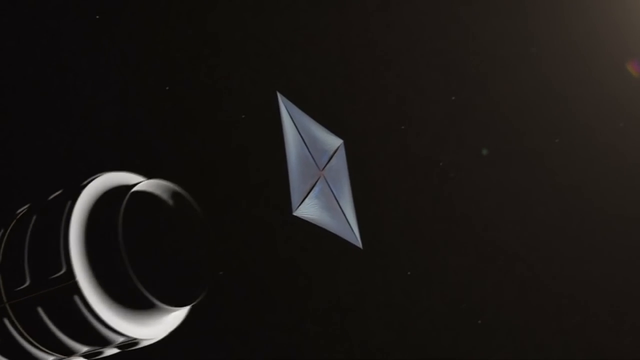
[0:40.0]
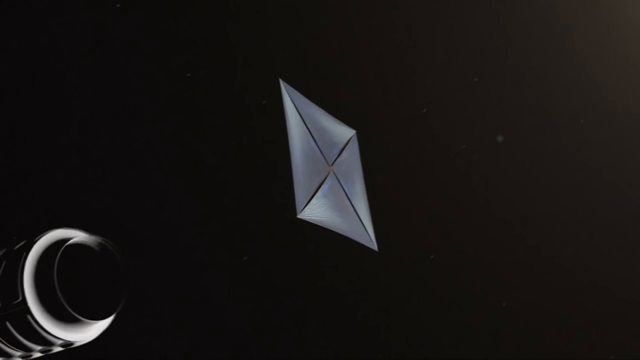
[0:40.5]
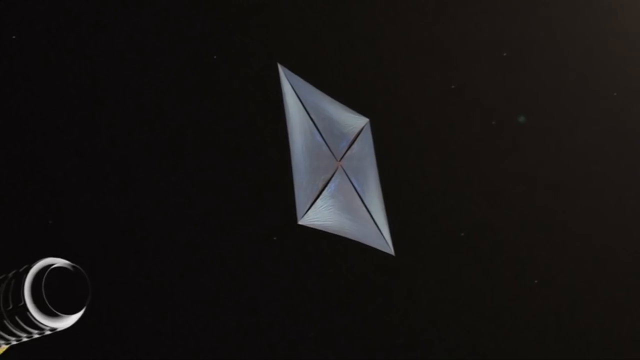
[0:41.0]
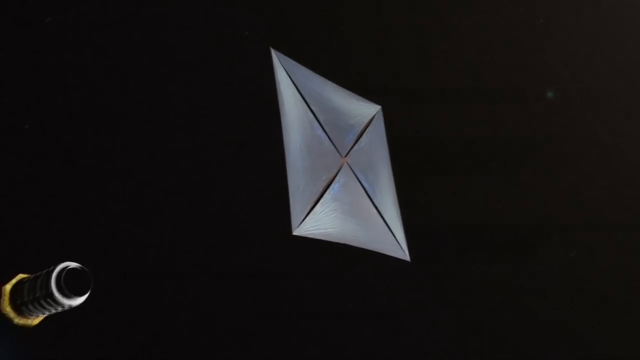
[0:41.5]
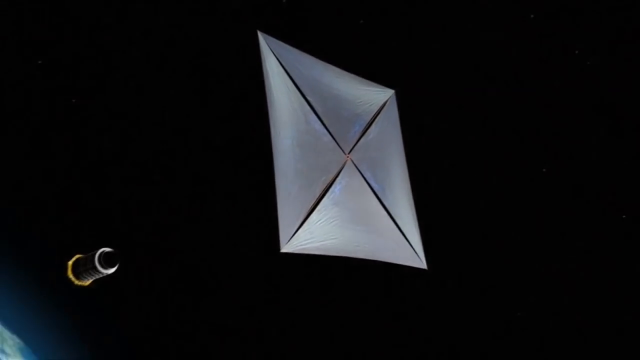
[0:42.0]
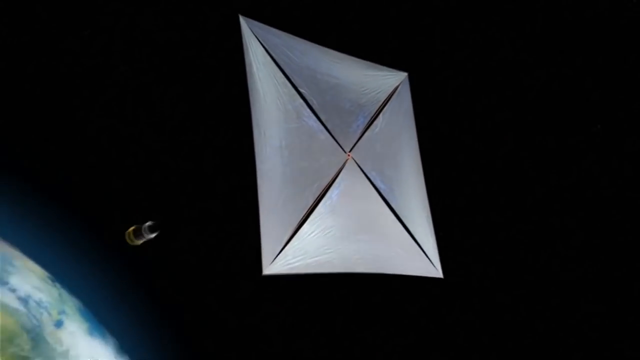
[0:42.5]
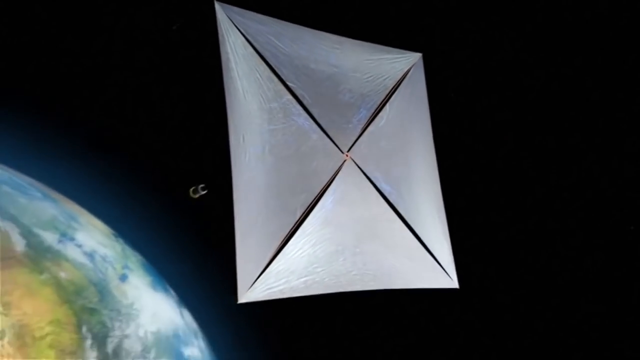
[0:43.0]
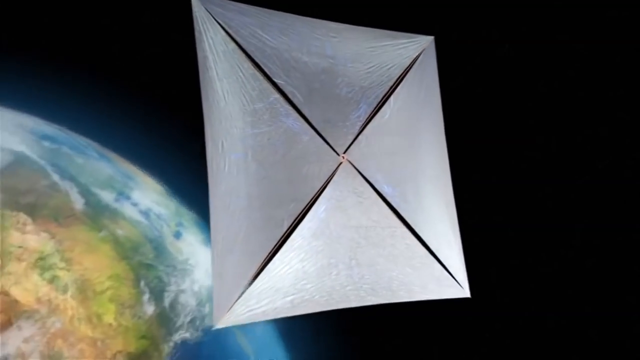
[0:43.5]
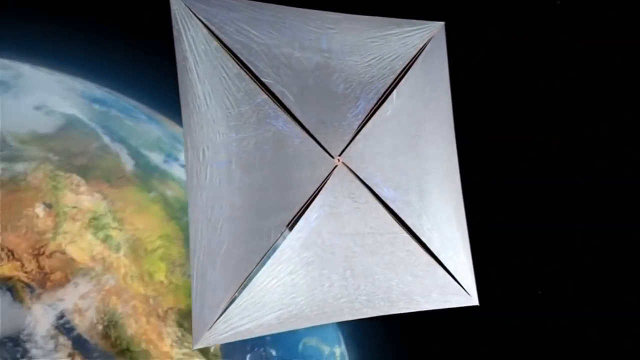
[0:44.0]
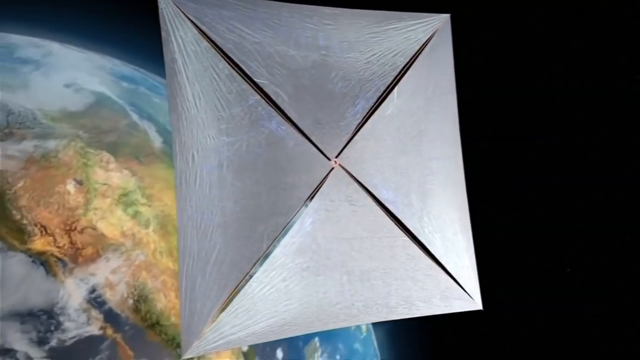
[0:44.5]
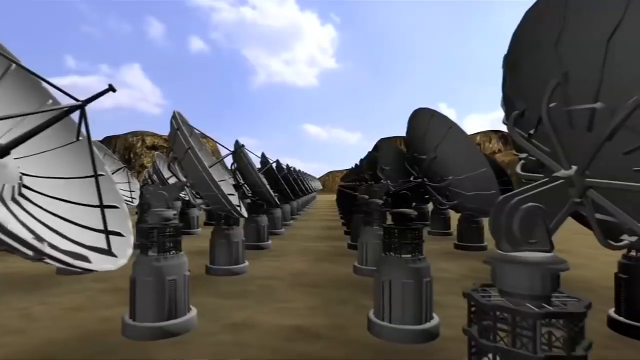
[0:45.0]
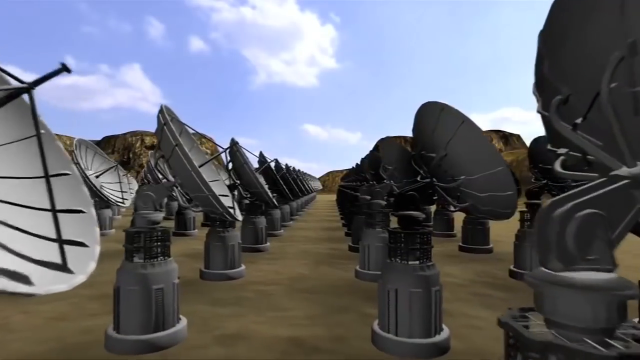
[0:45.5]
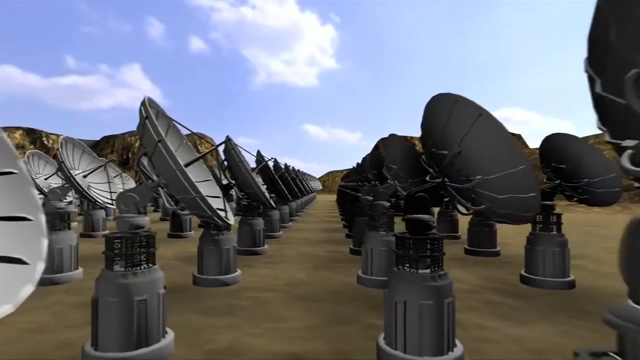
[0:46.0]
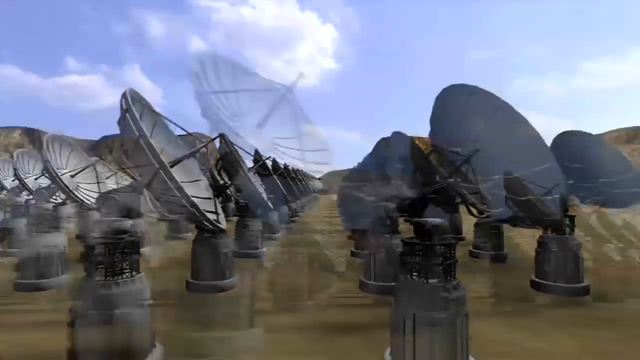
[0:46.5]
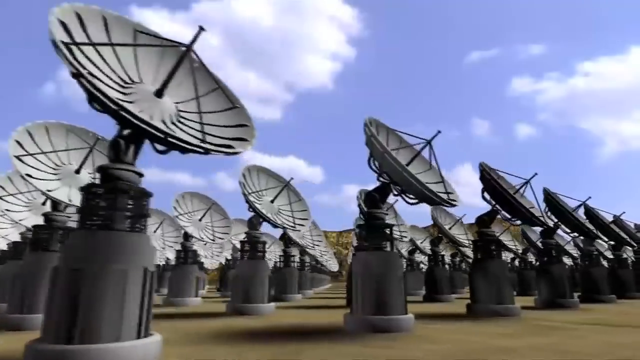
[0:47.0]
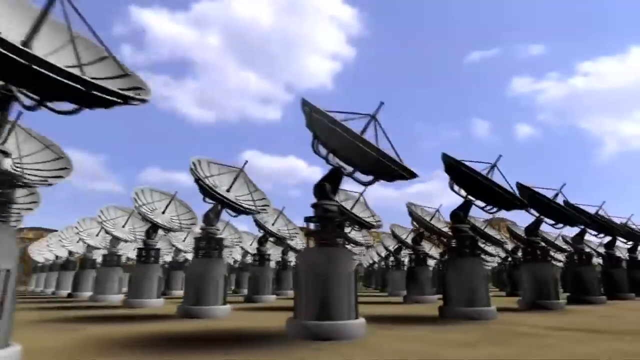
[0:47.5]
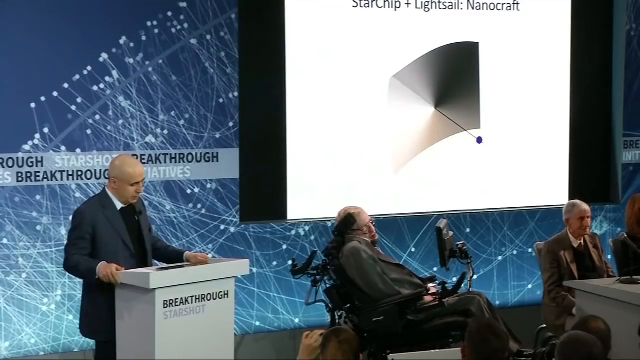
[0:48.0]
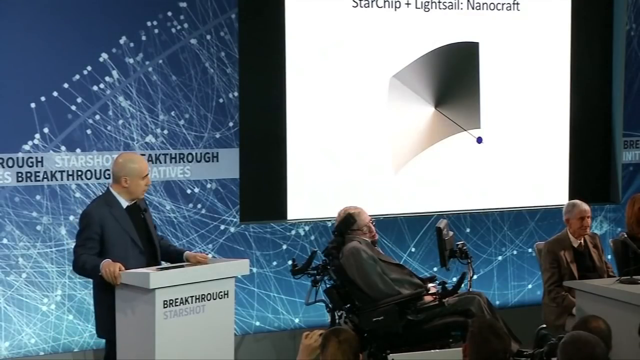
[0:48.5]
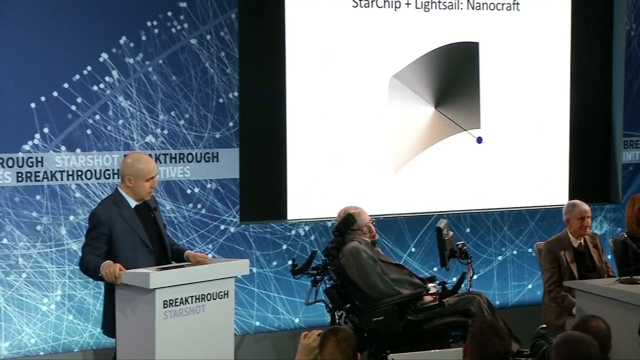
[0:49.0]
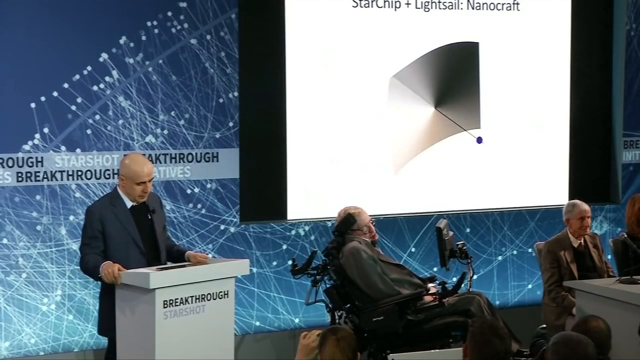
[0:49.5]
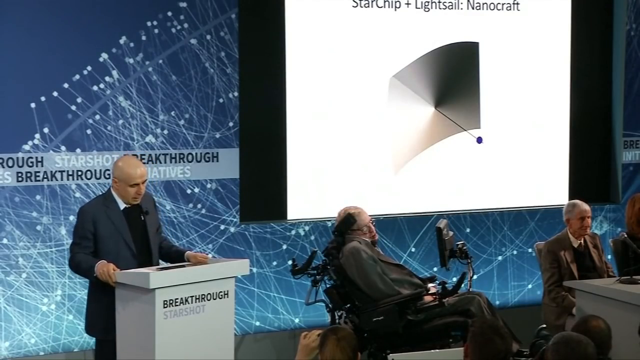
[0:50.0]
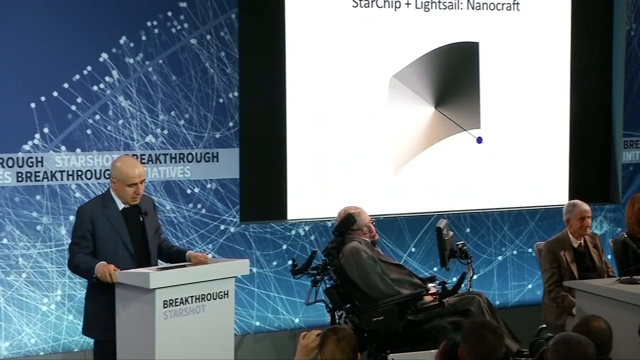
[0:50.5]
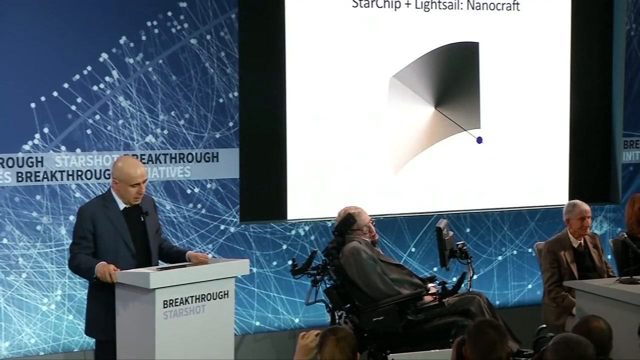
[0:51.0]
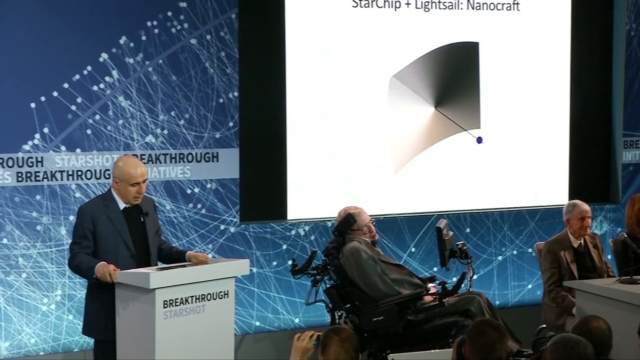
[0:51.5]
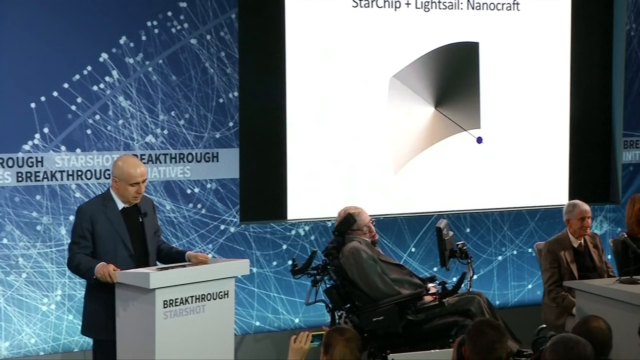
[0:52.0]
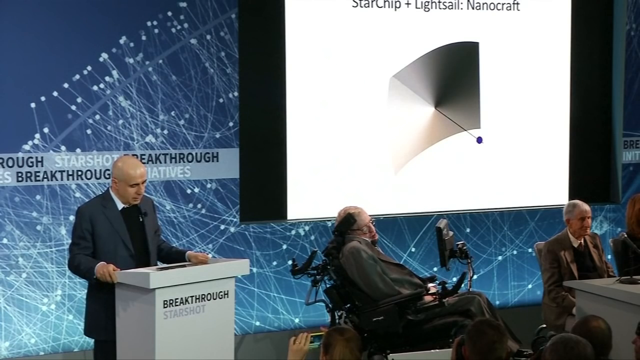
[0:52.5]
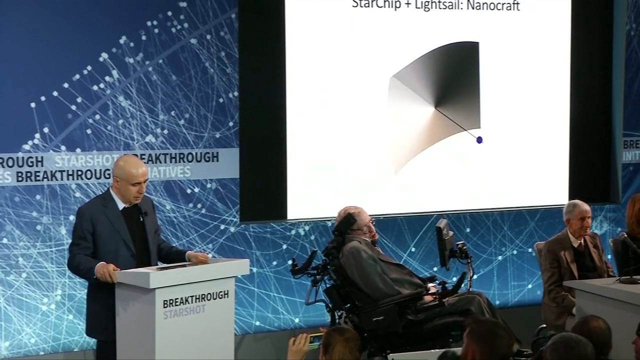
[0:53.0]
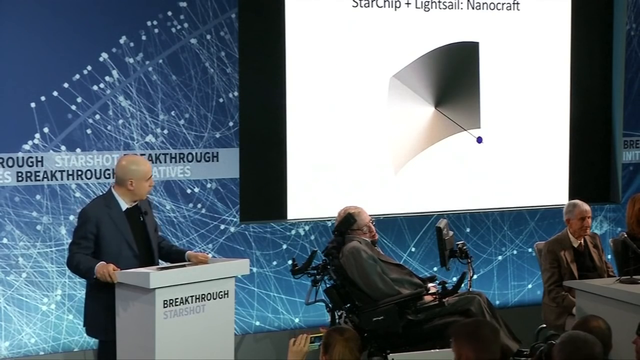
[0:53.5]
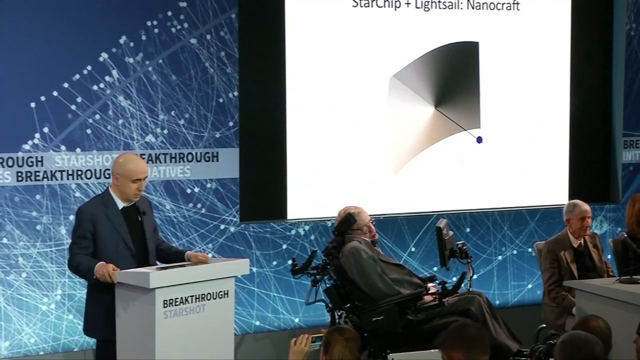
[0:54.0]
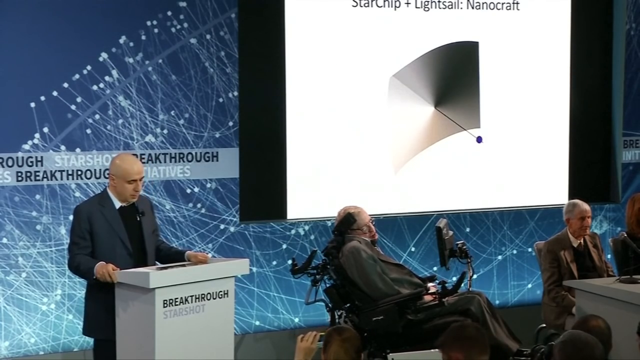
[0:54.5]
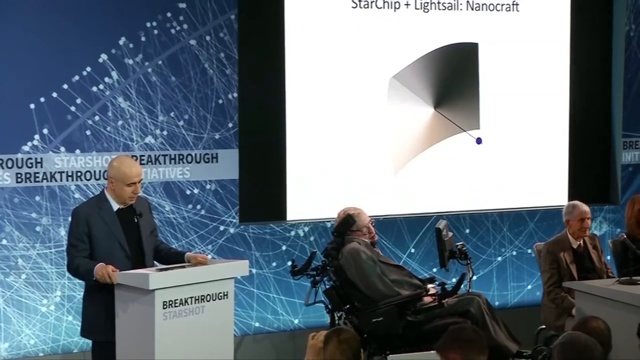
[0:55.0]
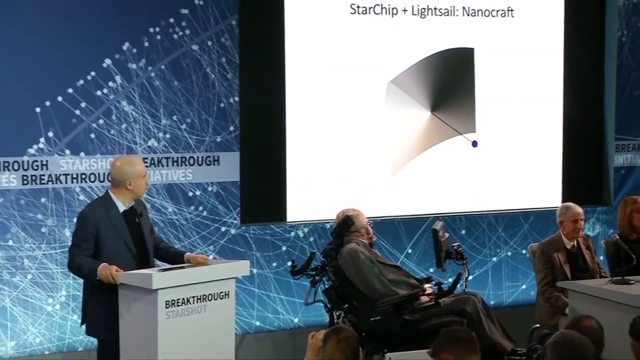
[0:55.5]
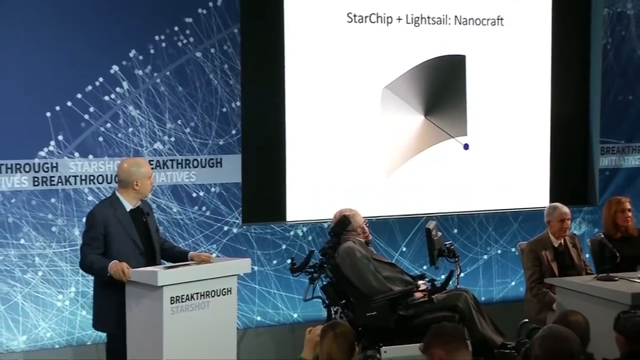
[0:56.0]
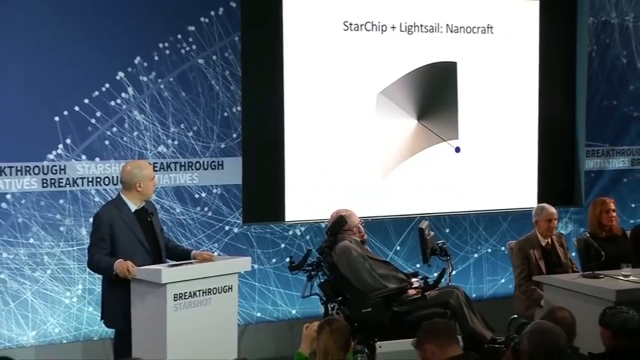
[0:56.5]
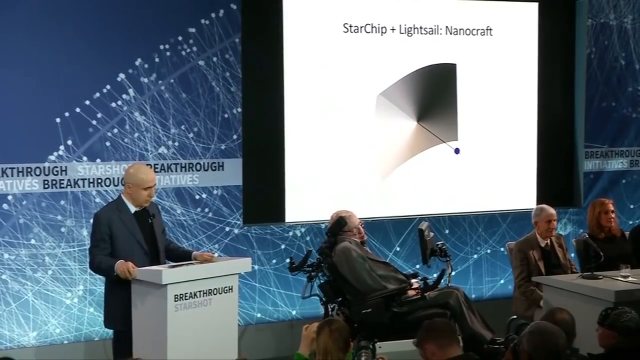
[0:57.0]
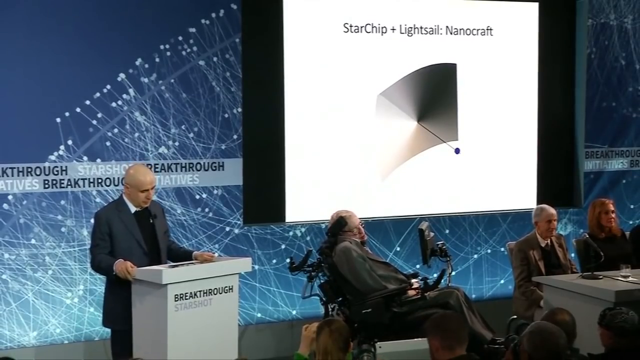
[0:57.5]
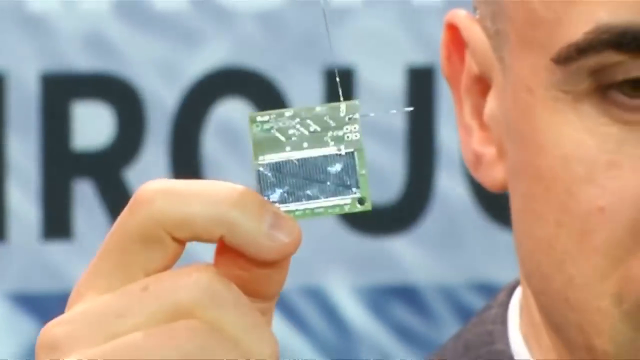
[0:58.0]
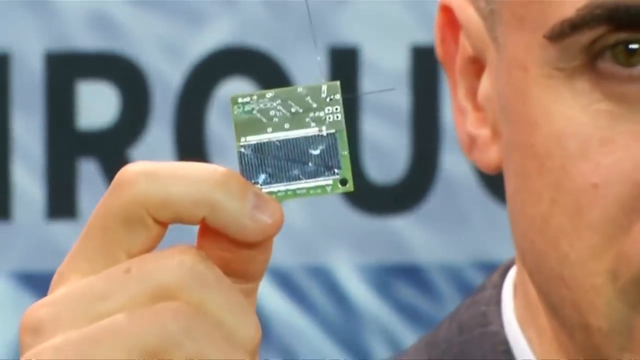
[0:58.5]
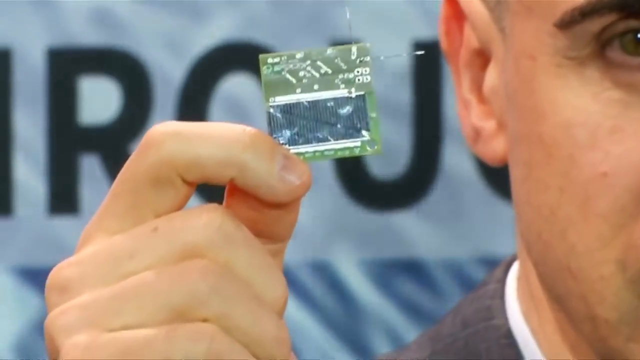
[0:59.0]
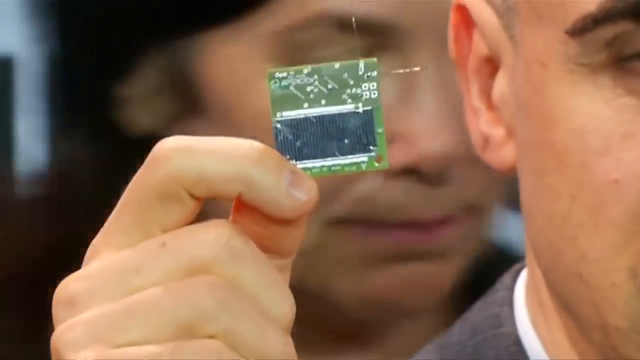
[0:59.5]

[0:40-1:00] The square object that has come away from the bulk of the machine is shown: it is square with diagonal lines across it, forming what looks like an X in the middle. The camera view spans around it. It looks metallic and is in the atmosphere, with Earth far below, many thousands of miles away. It is unclear what it is, but it may be a satellite. Next, lots of different satellites appear in rows, pointing towards the sky; they move around and move their pointers upwards. The video then cuts back to the conference or presentation Stephen Hawking is at. A speaker at a podium looks at a presentation about StarChip and Lightsail: nanocraft, which looks like the square instrument seen earlier. Stephen Hawking is on the stage, as are at least two other panel members sitting at a table with a microphone in front of them. The man is talking and looking at the presentation.